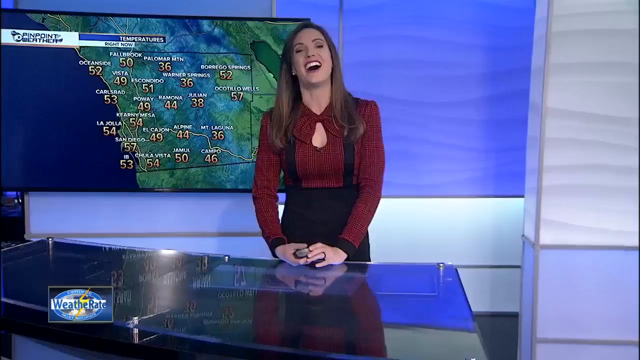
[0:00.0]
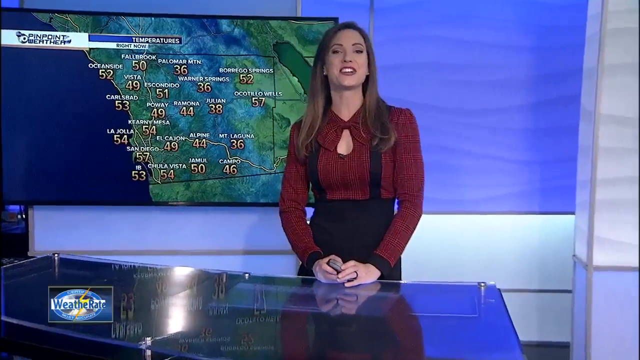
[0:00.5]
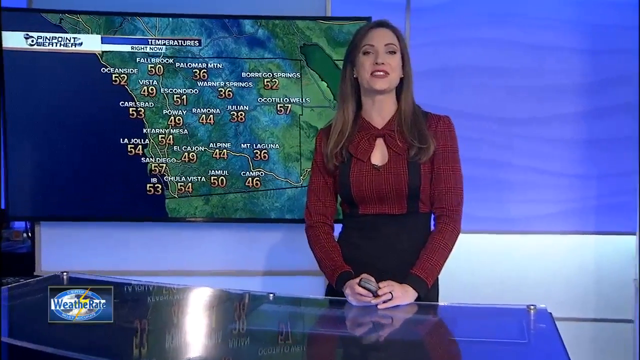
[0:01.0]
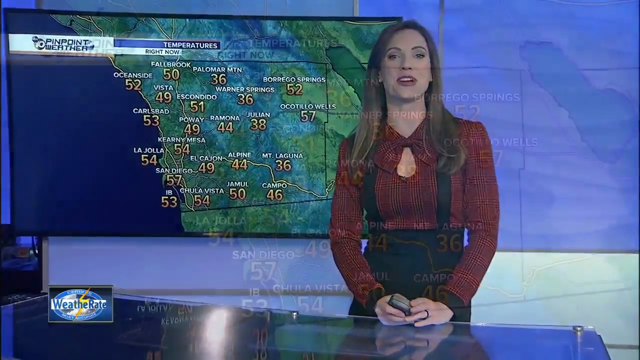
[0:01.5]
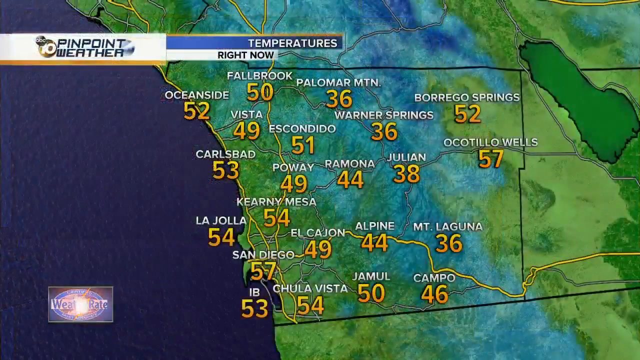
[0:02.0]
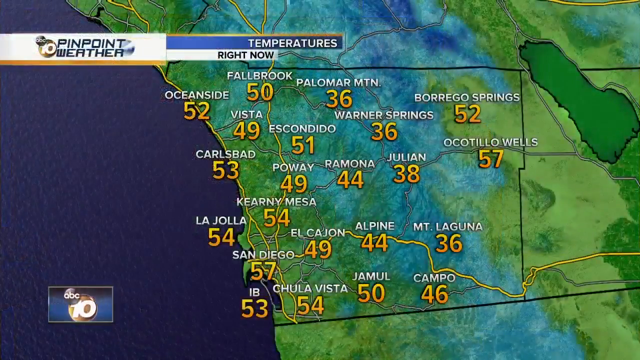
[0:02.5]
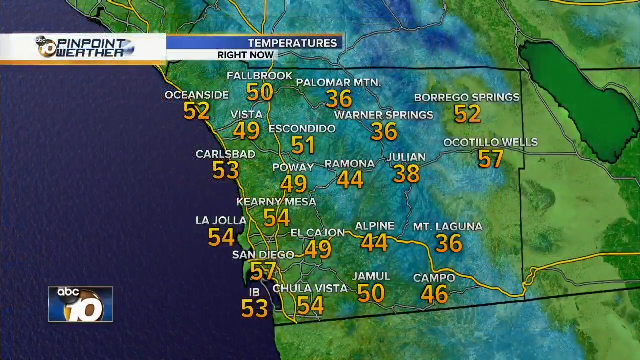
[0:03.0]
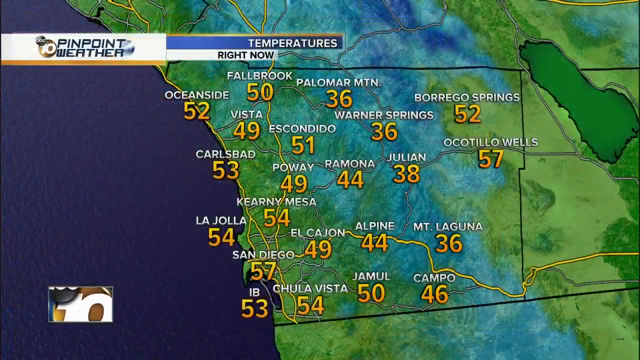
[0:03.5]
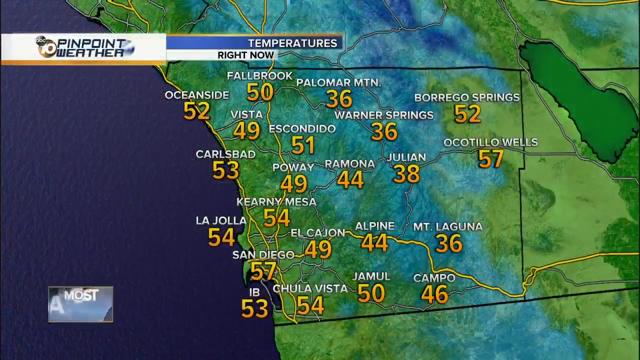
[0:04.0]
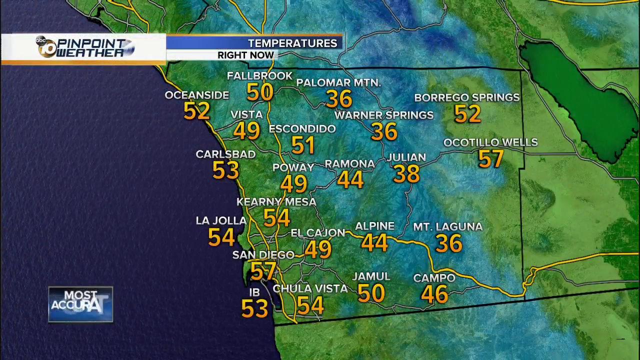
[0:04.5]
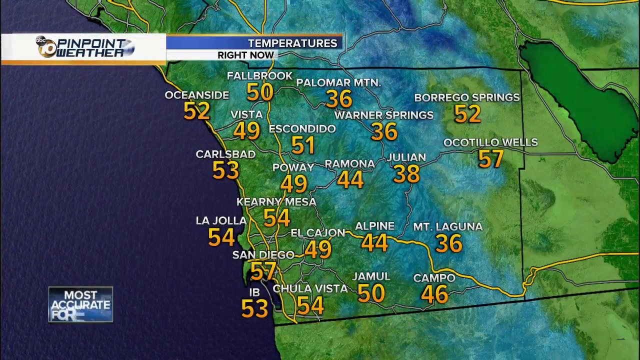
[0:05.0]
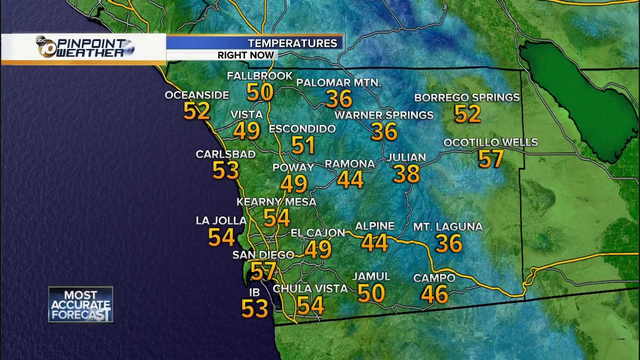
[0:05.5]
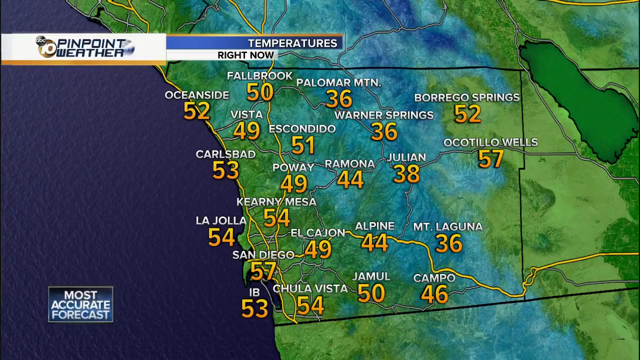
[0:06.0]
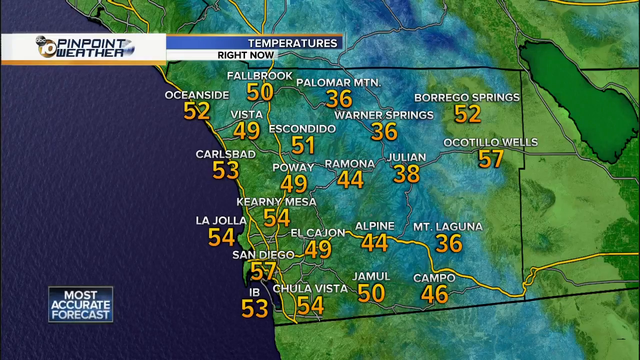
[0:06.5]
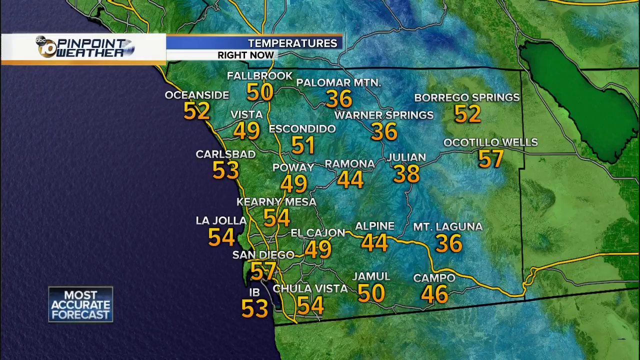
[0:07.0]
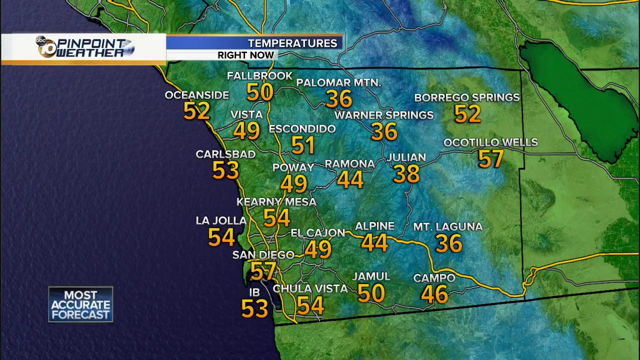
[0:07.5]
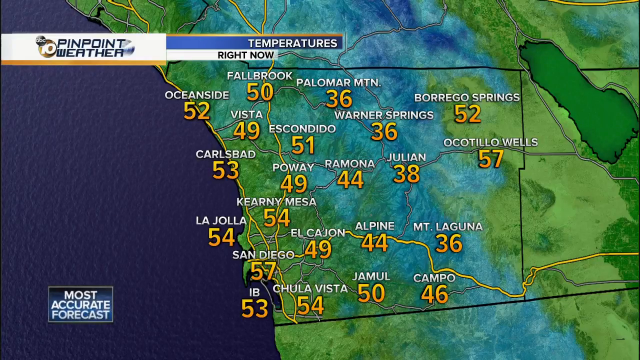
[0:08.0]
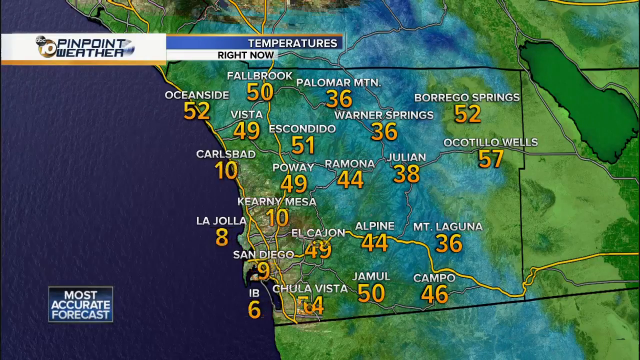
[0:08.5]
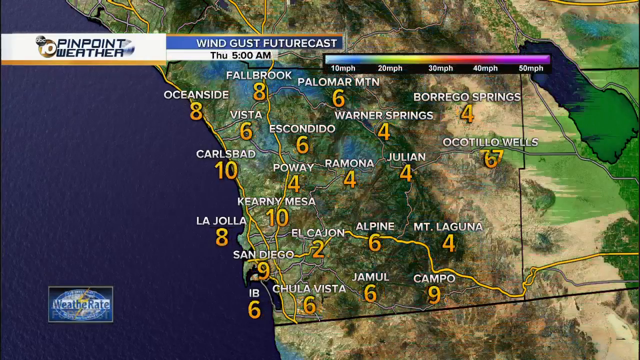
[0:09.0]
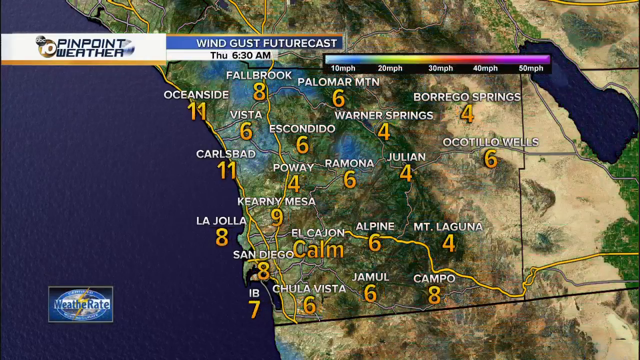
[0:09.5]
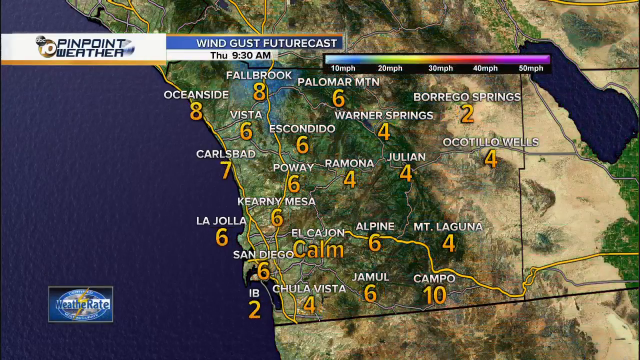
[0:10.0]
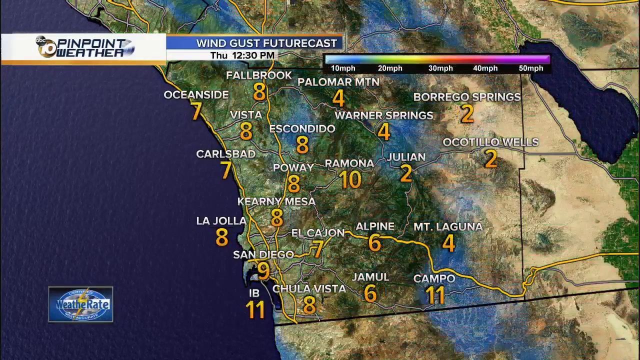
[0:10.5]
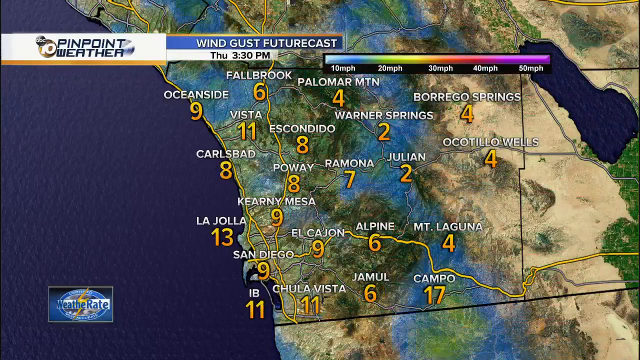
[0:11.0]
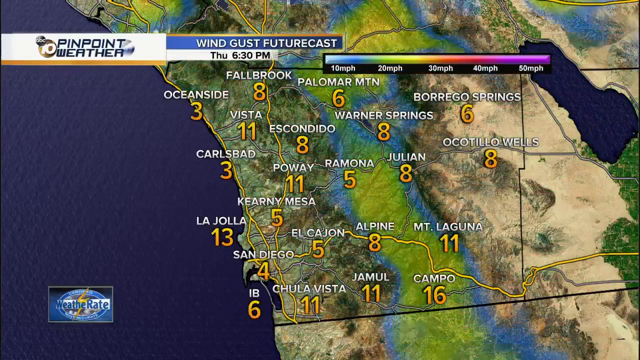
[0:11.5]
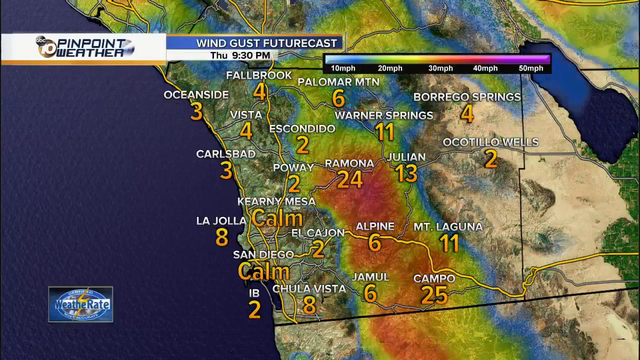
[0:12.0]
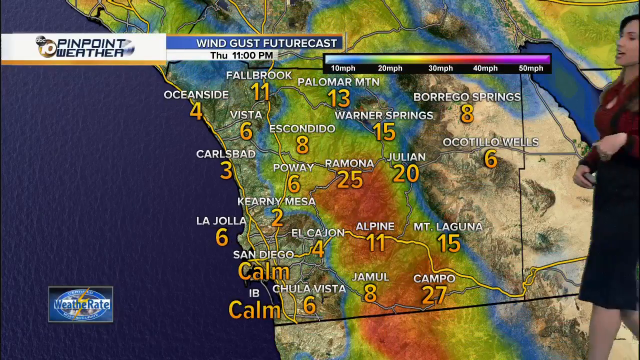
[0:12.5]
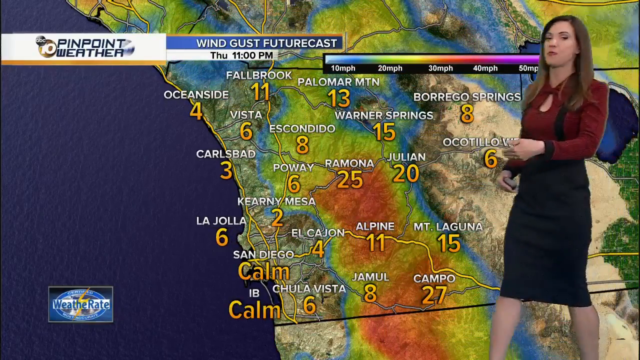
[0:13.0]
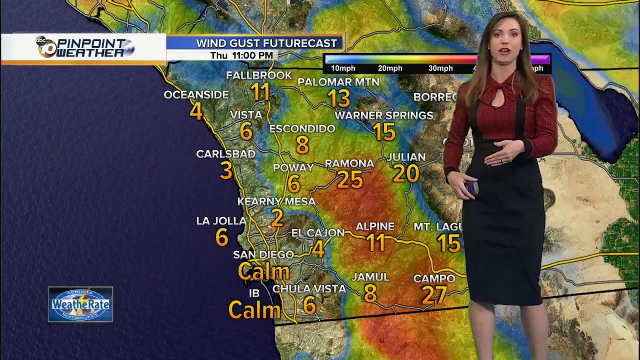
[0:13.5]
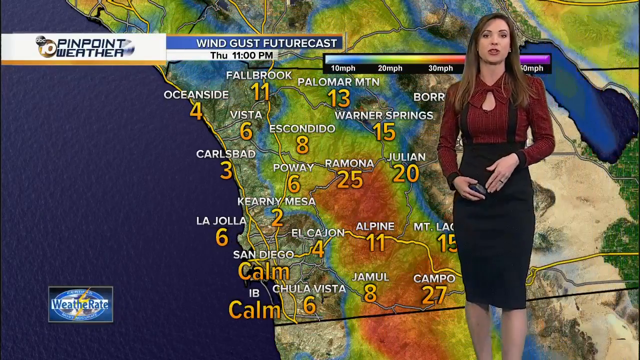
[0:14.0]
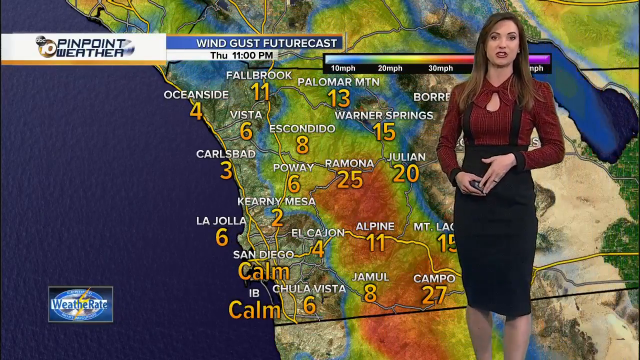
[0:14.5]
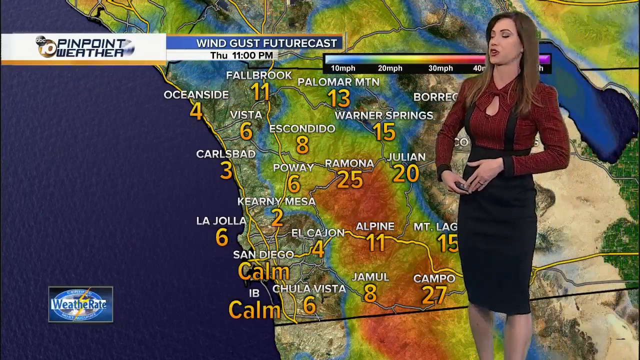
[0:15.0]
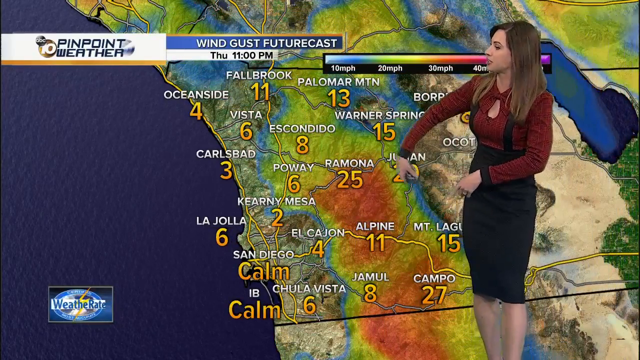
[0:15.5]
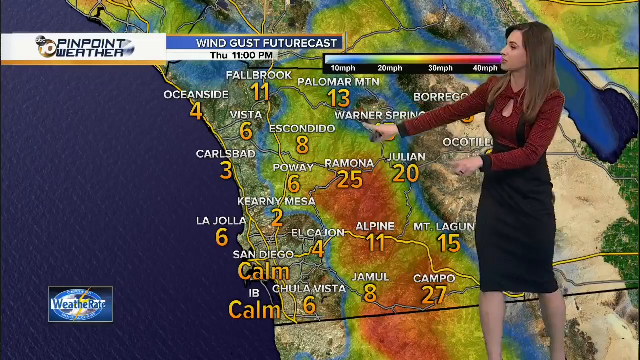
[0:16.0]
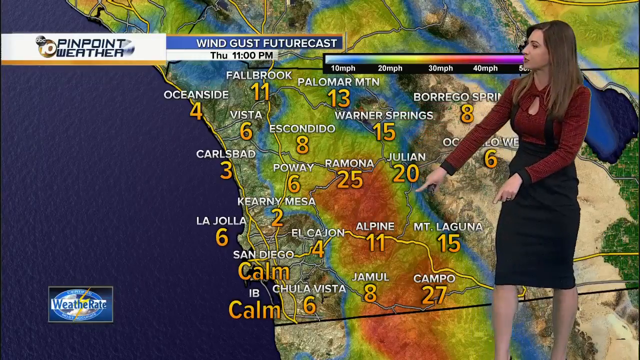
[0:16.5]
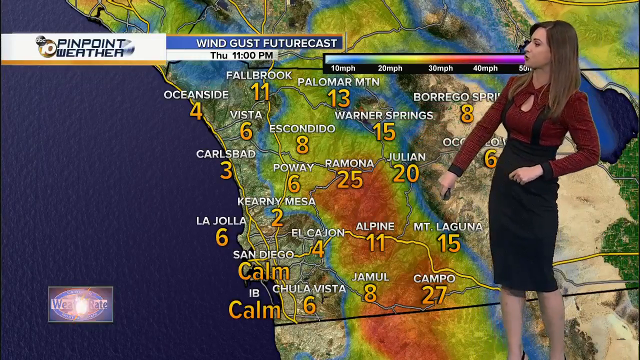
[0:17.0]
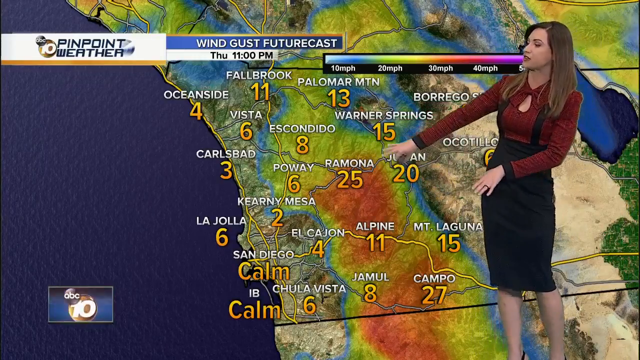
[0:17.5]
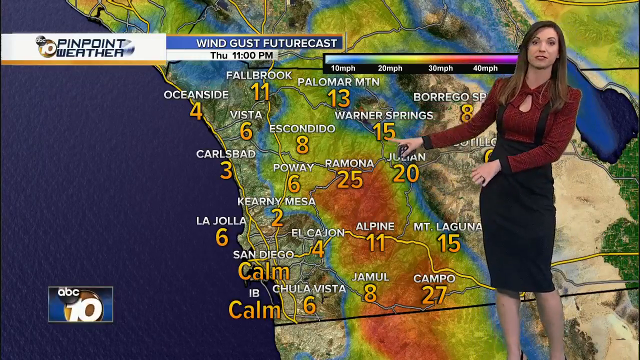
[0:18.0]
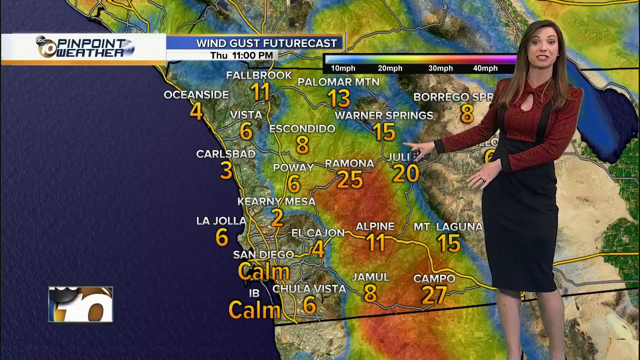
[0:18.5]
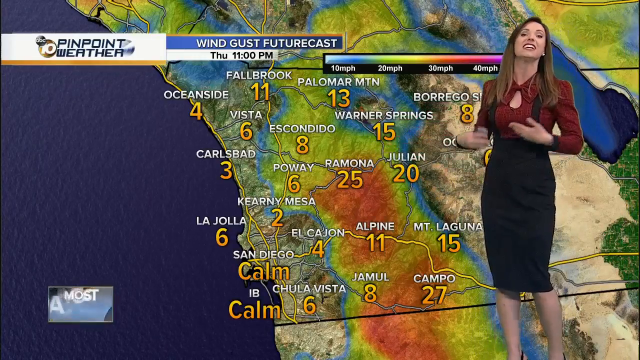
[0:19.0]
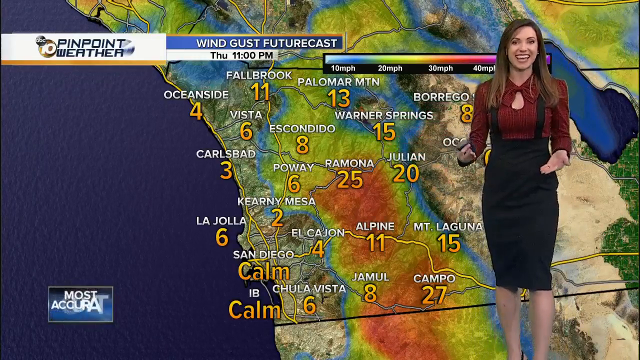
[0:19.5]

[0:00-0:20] A weather broadcast from Pinpoint Weather opens on a woman in a studio, standing right in front of a bright background that shifts between shades of blue and green as a weather map changes behind her. She has long dark hair, wears earrings, looks smart, and has a light, cheerful expression, smiling. To her left, a graphic comes up and changes; it has a green background at first, and then text appears on the right and then the left over a black and blue background. The temperatures and weather on the display keep changing as she gestures. The map is labeled "Pinpoint Weather", and small logos for the broadcast's name and branding are in the corners.